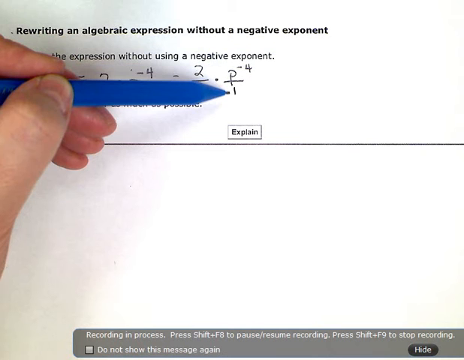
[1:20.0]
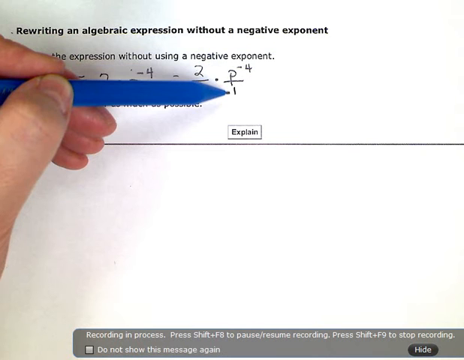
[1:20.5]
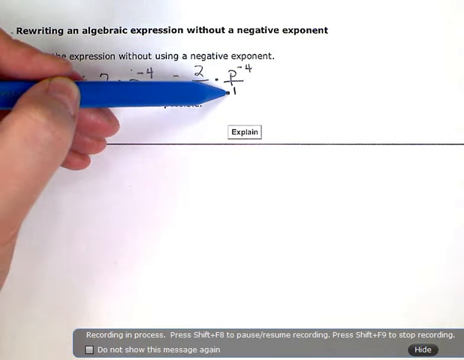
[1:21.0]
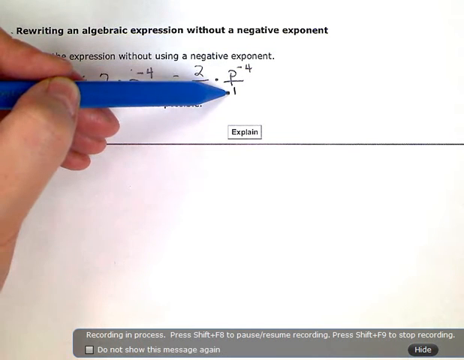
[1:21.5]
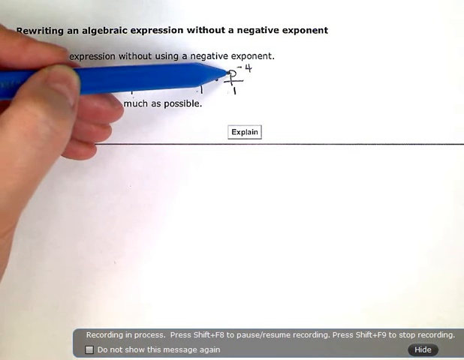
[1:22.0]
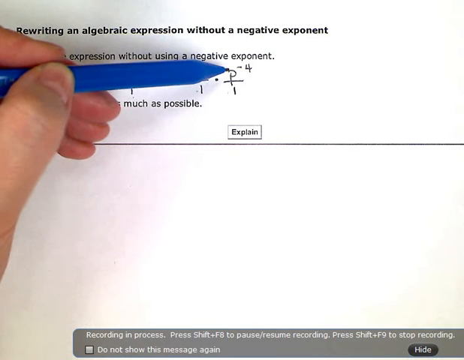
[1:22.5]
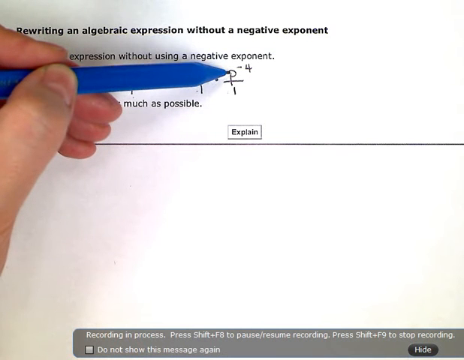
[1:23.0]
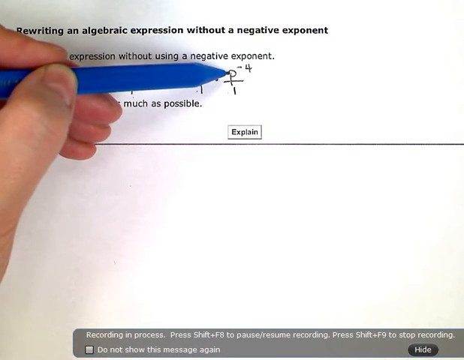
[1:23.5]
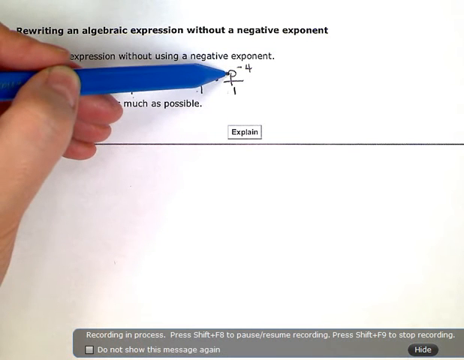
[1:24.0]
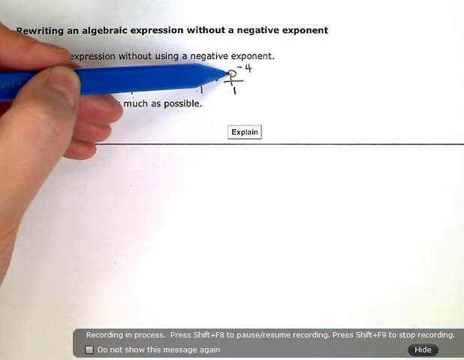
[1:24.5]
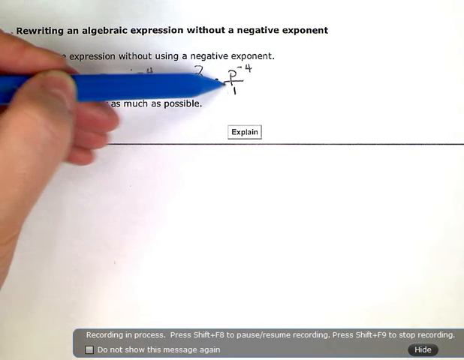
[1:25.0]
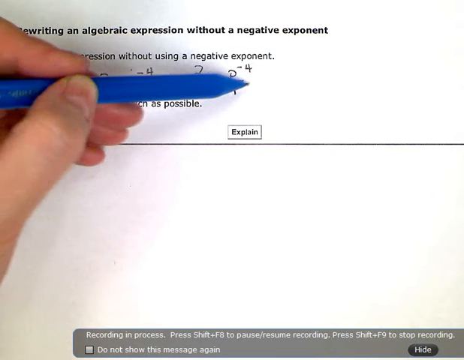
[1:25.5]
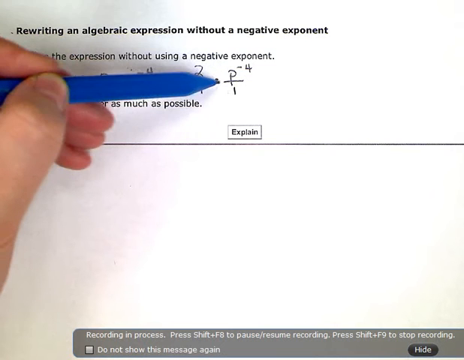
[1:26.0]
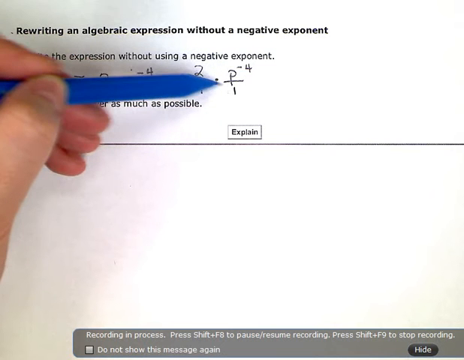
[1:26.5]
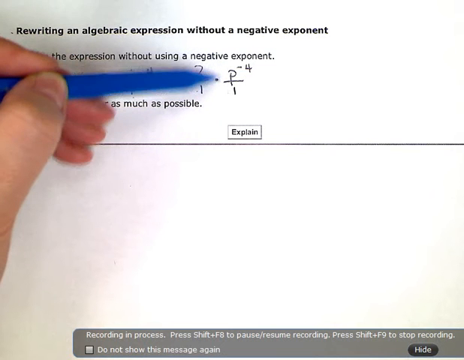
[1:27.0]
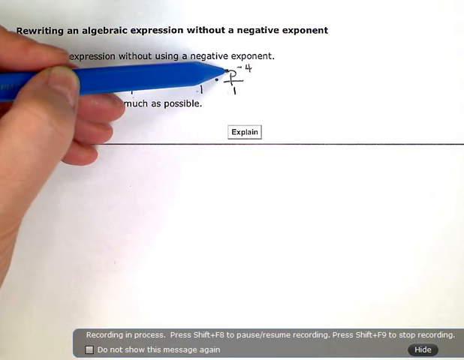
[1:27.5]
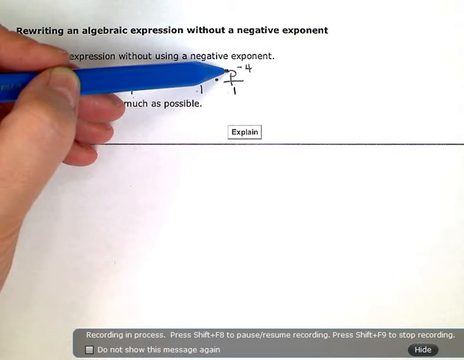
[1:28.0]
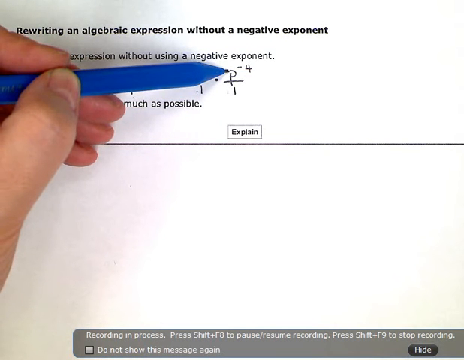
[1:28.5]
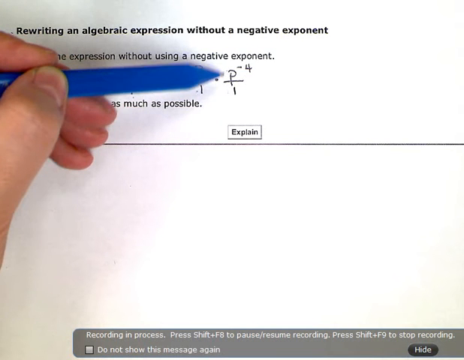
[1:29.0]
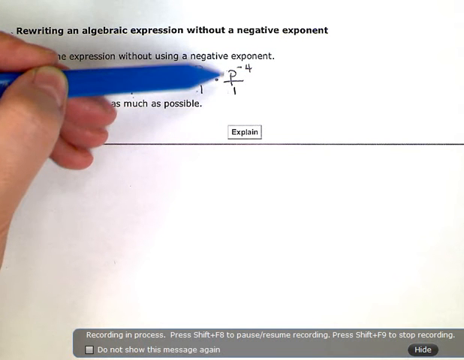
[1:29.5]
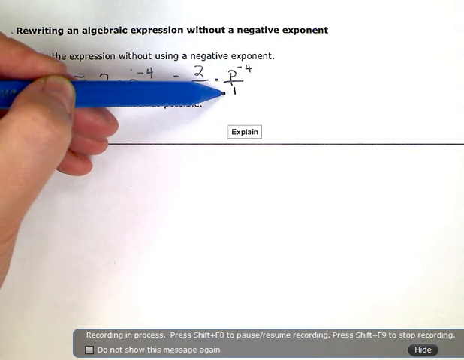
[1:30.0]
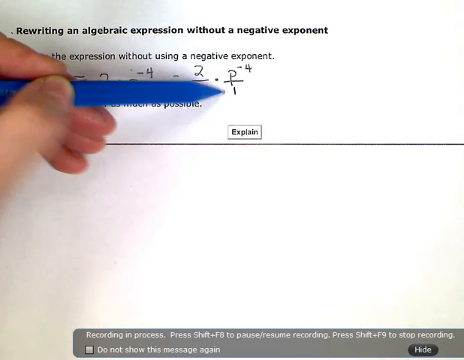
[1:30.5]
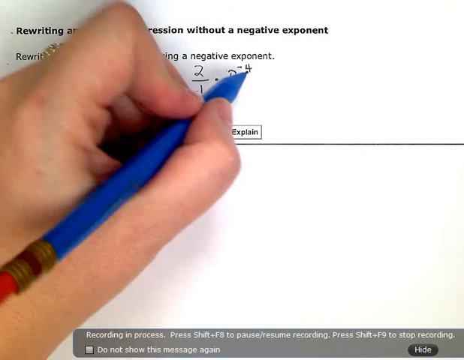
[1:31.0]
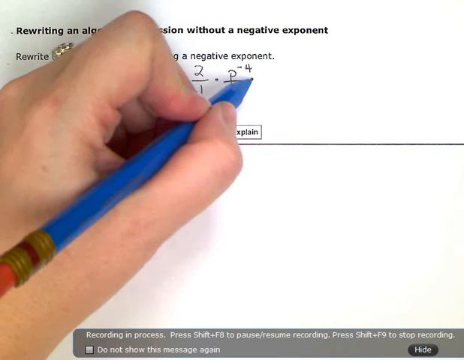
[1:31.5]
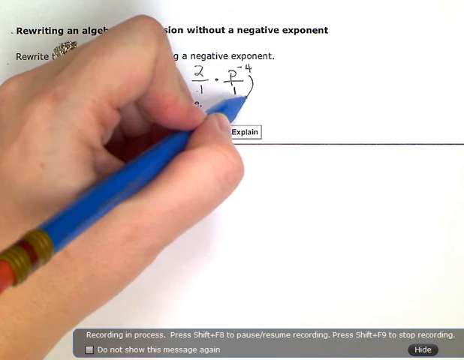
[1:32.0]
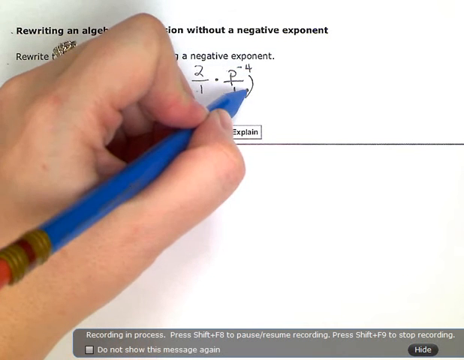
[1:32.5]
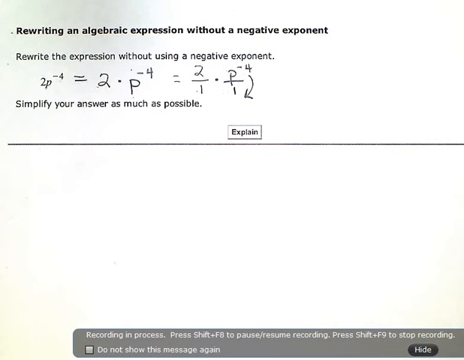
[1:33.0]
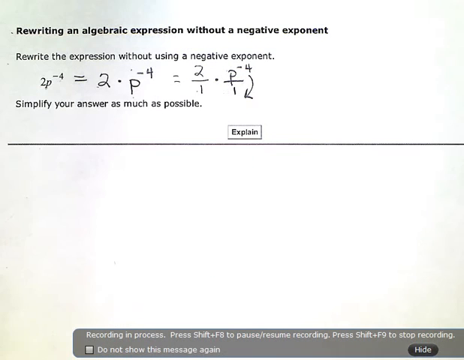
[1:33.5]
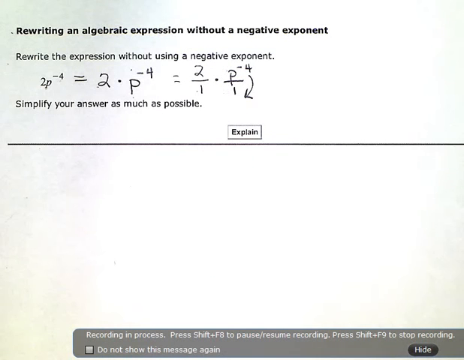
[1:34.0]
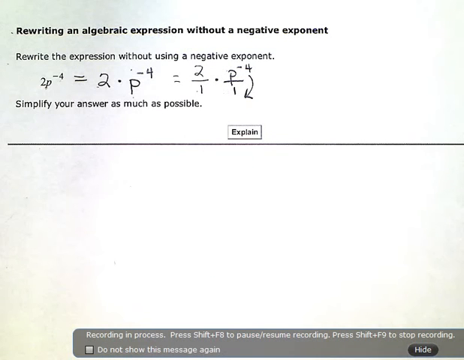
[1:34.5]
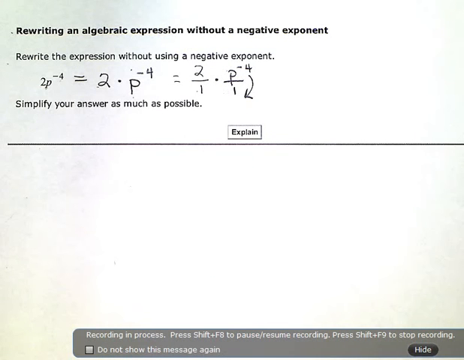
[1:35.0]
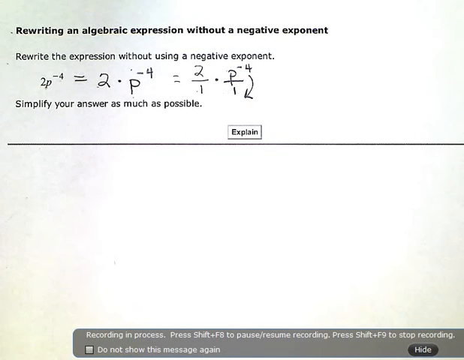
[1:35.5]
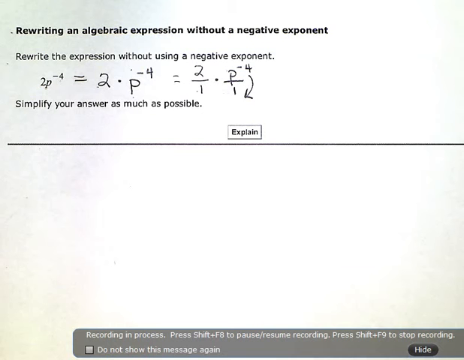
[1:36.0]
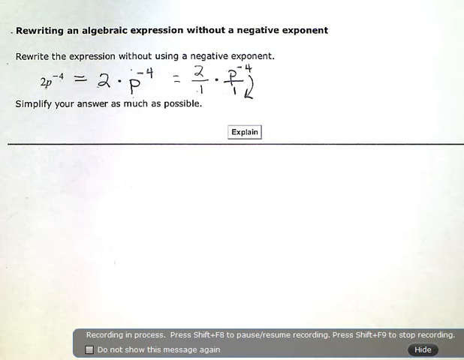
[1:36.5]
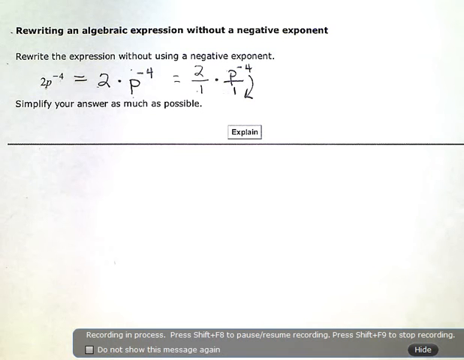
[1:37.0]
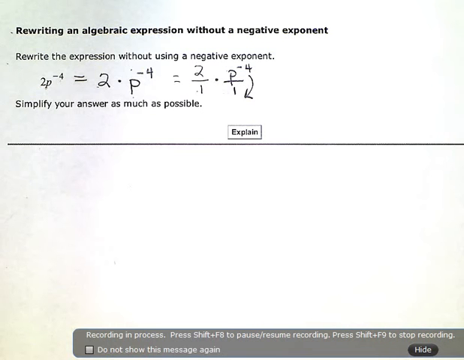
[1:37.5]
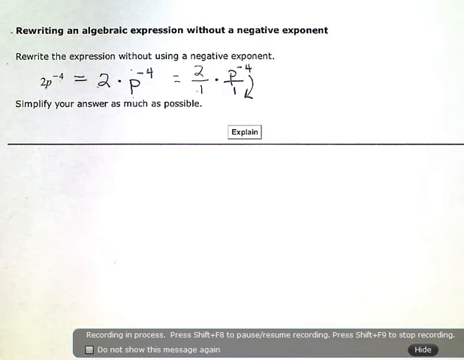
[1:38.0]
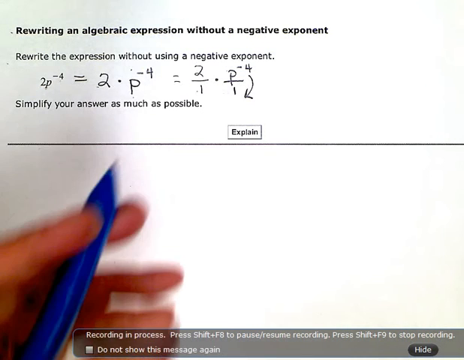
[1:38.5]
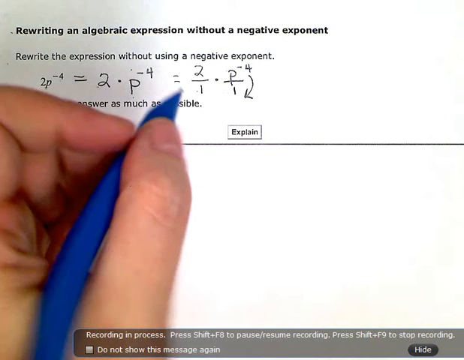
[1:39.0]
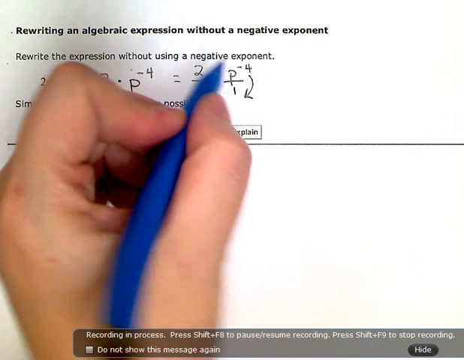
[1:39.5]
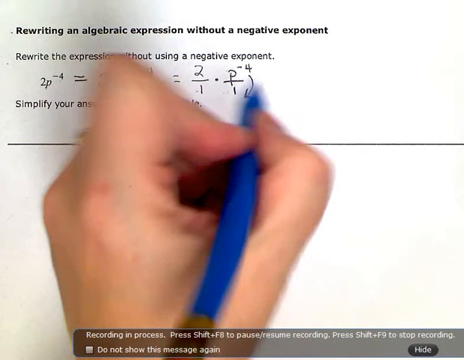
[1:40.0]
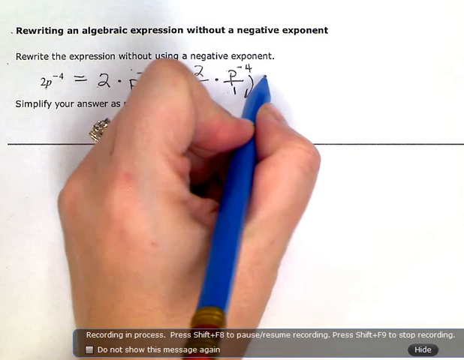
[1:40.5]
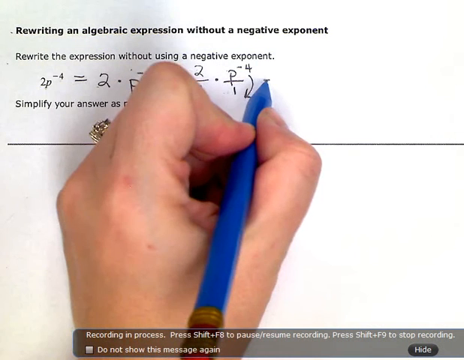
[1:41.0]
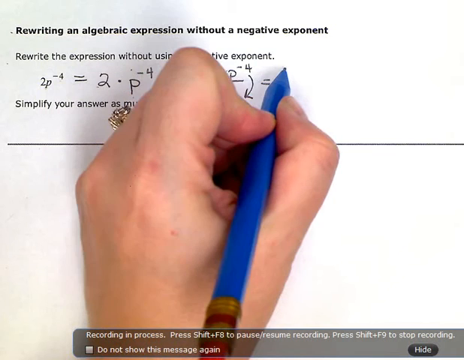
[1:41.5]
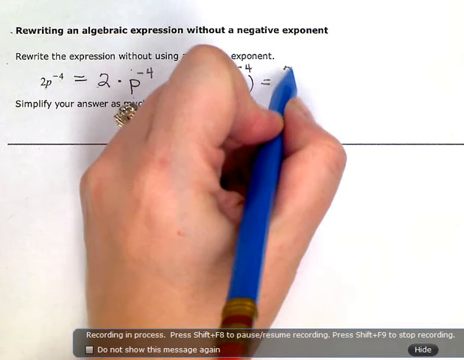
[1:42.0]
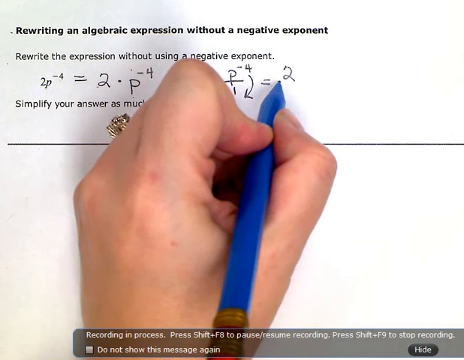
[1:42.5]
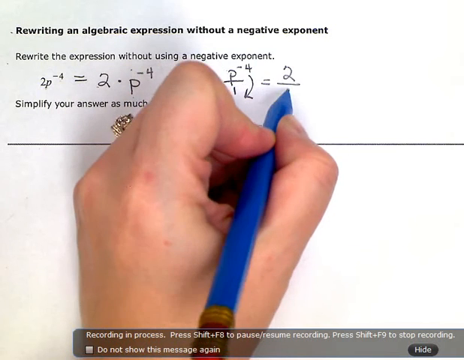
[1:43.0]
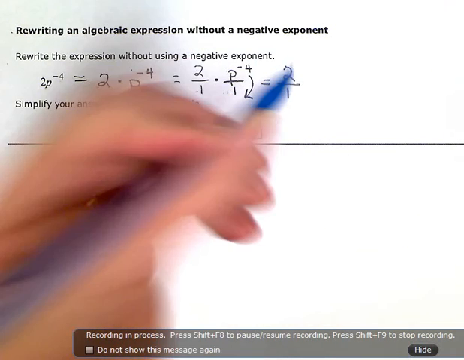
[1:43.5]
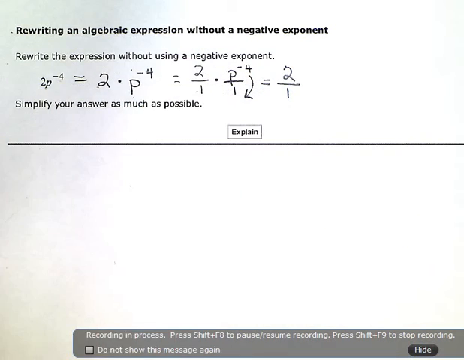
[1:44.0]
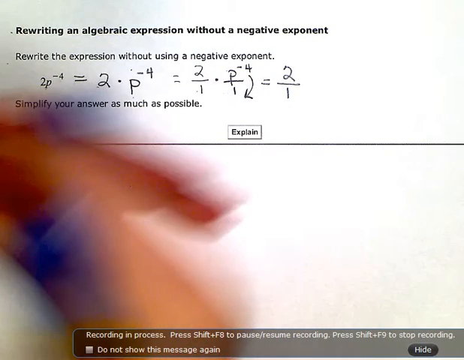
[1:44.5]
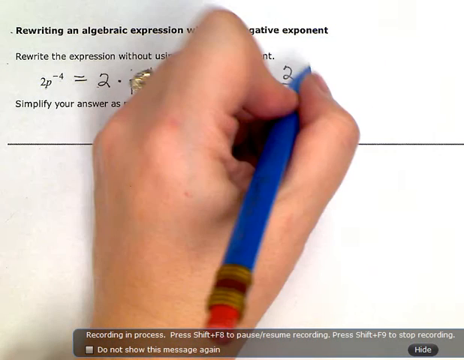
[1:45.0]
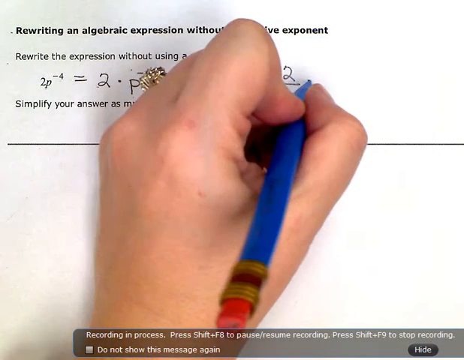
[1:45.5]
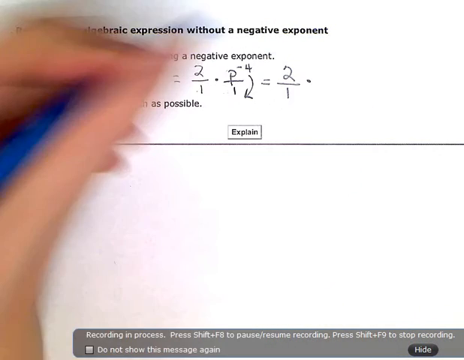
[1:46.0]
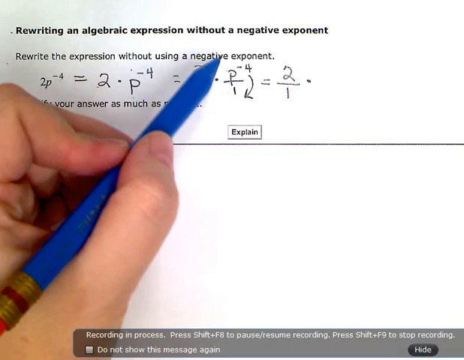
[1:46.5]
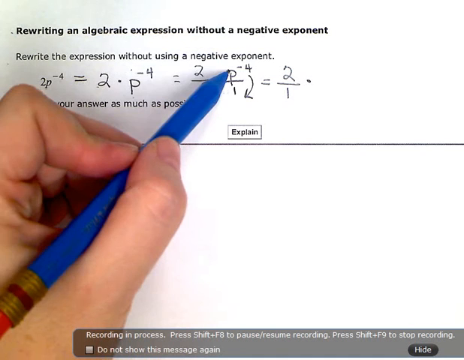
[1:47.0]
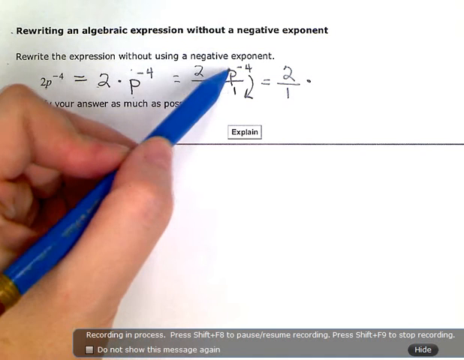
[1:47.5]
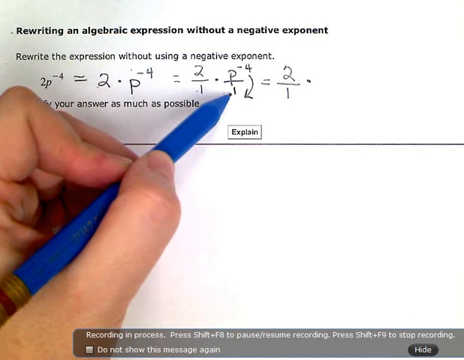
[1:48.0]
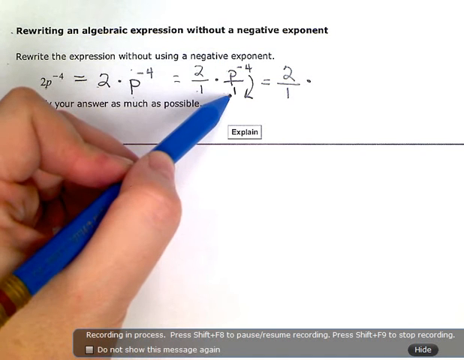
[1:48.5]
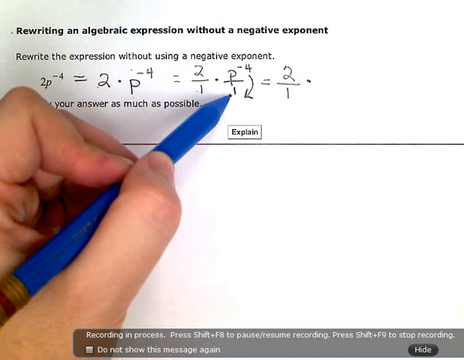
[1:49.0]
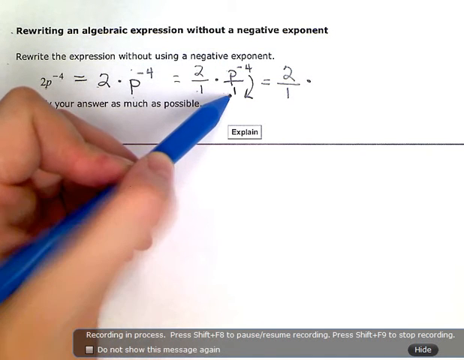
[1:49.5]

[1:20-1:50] A hand on the left side of the screen holds a blue felt-tip marker tightly, the thumb mostly bent and the marker resting on three supporting fingers with the index finger used for control. At the top of the page is the text "rewriting an algebraic expression without a negative exponent," with an algebraic problem below. Using the felt-tip pen as a pointer, he points at the number one under the letter P, presses down softly and taps a couple of times with the tip on the letter P, and moves the pen back and forth repeatedly. He moves his hand all the way off the screen, then the pen quickly comes back and he writes equals 2 over 1 with a dot beside it as a multiplication symbol. Meanwhile he constantly rotates the pen in circular motions and moves his hand back and forth rapidly.